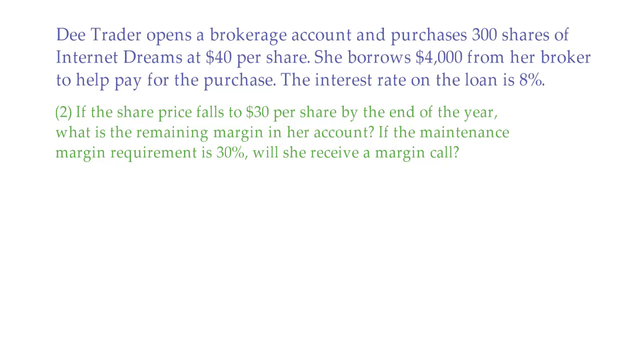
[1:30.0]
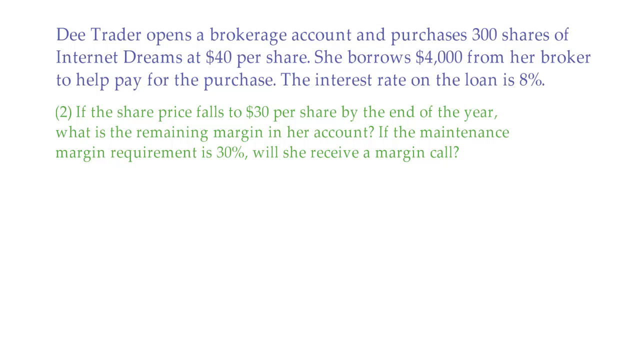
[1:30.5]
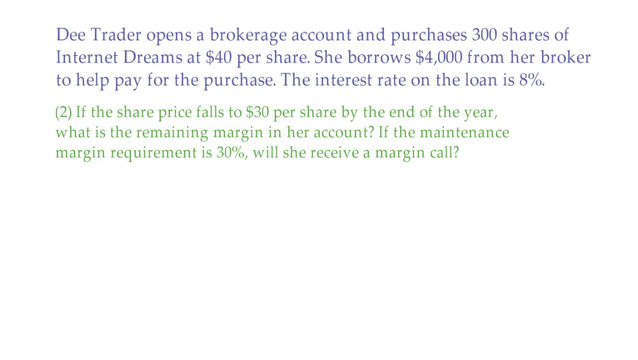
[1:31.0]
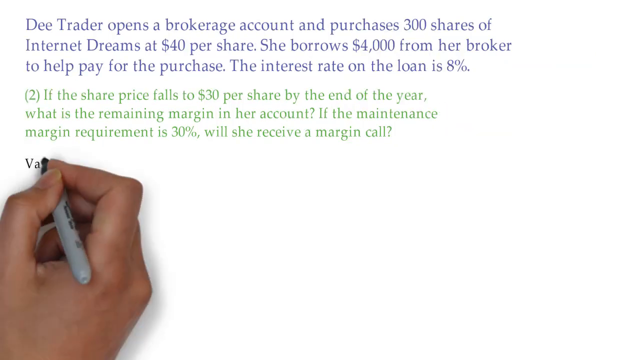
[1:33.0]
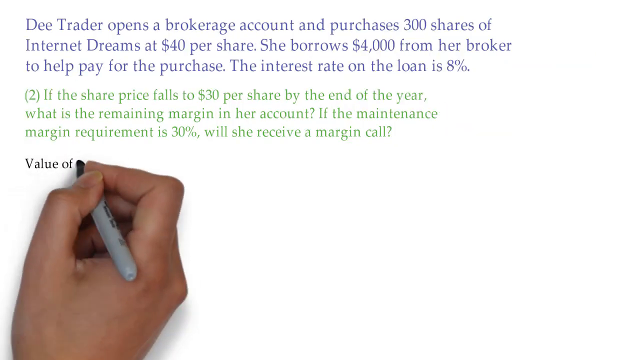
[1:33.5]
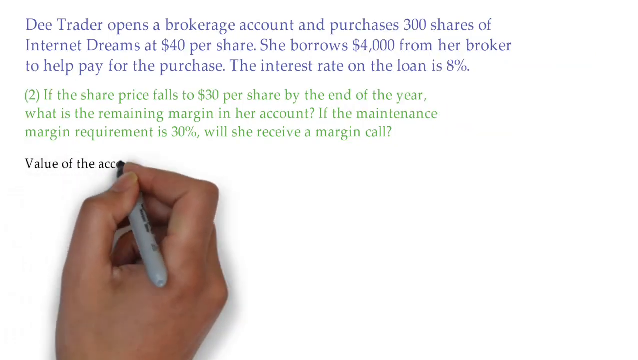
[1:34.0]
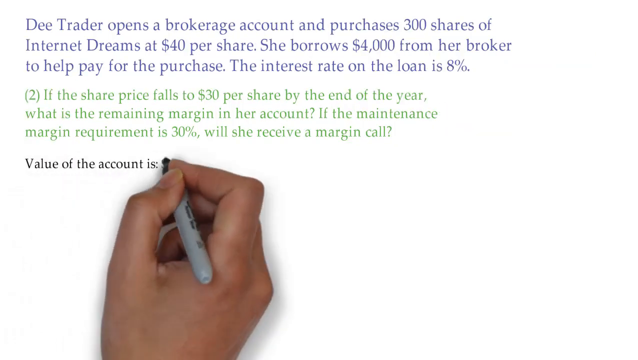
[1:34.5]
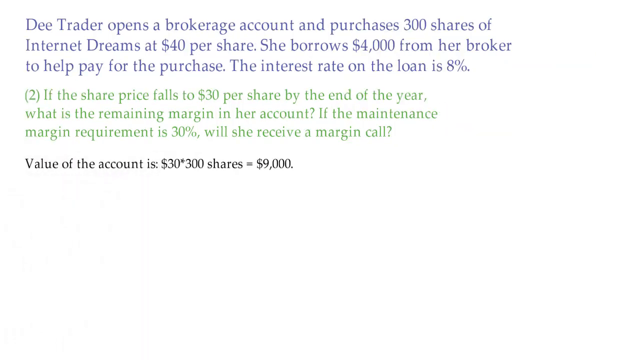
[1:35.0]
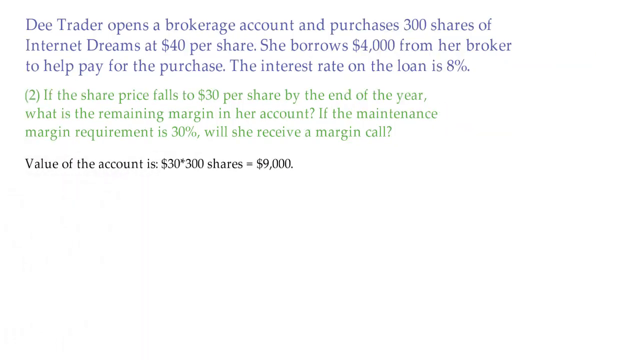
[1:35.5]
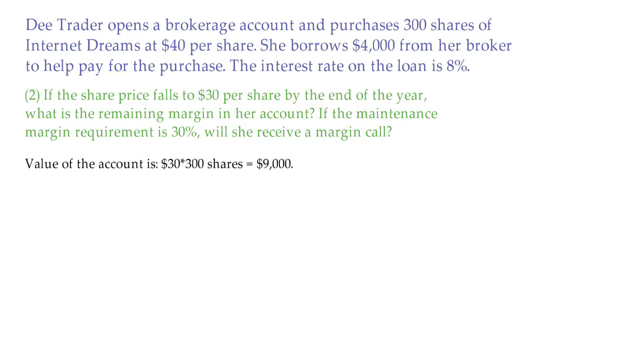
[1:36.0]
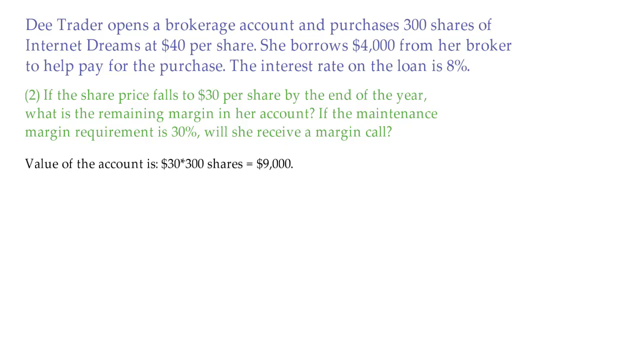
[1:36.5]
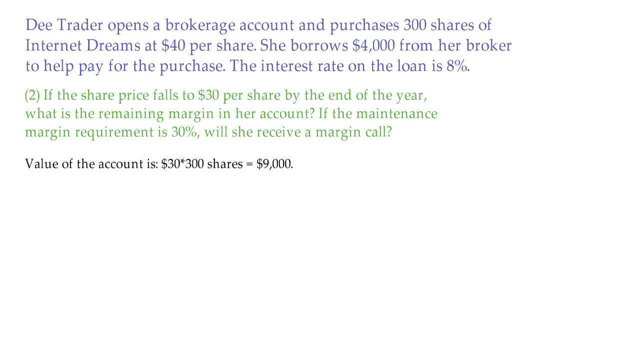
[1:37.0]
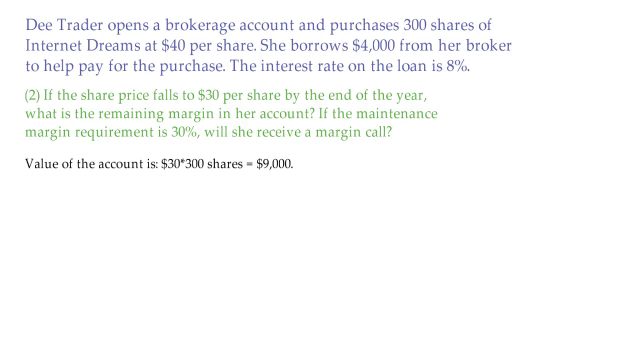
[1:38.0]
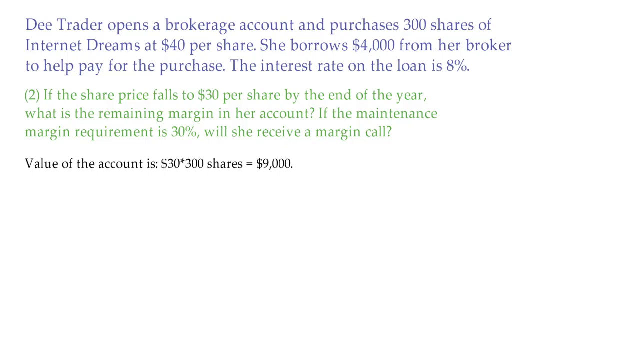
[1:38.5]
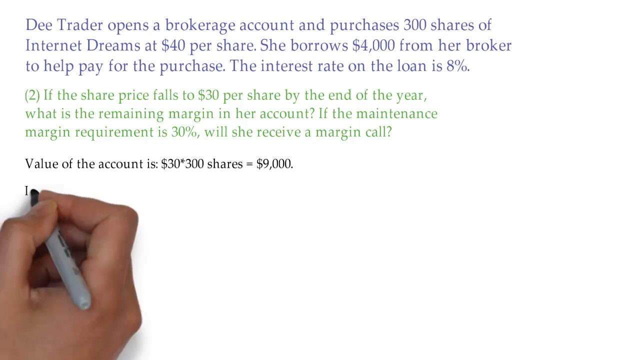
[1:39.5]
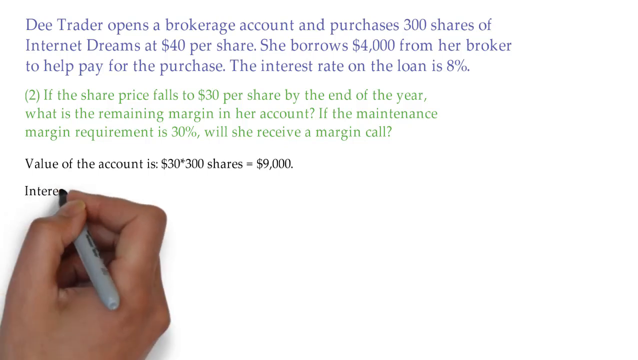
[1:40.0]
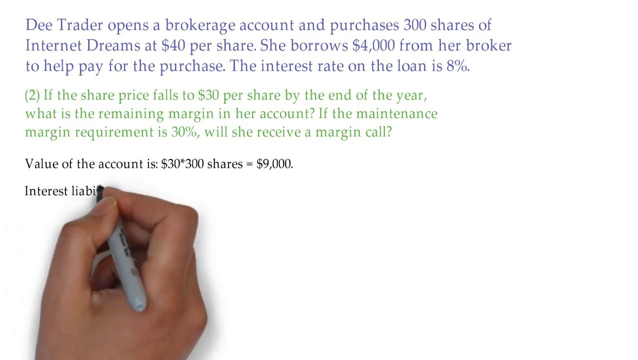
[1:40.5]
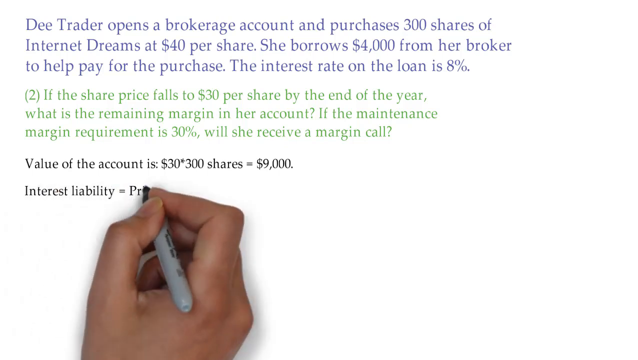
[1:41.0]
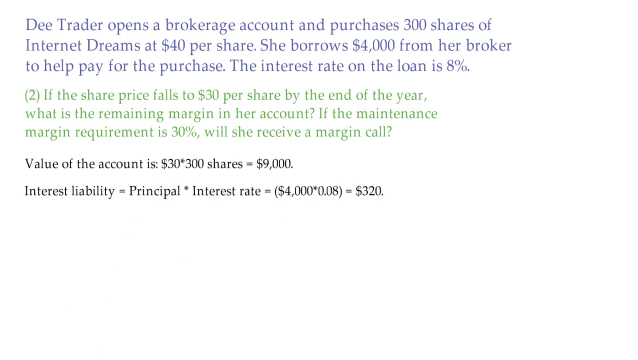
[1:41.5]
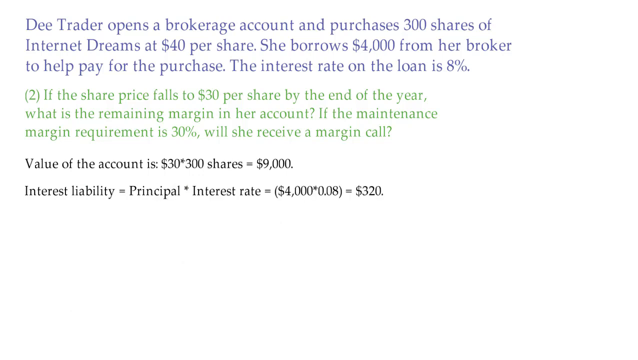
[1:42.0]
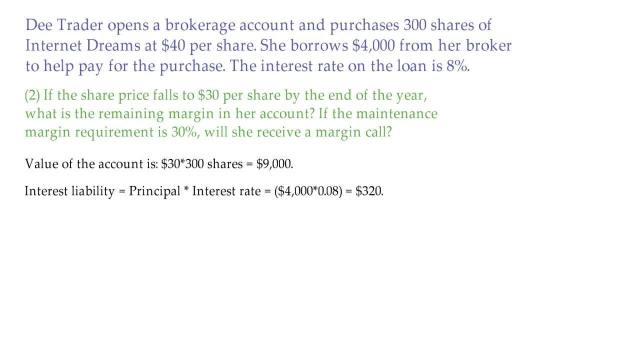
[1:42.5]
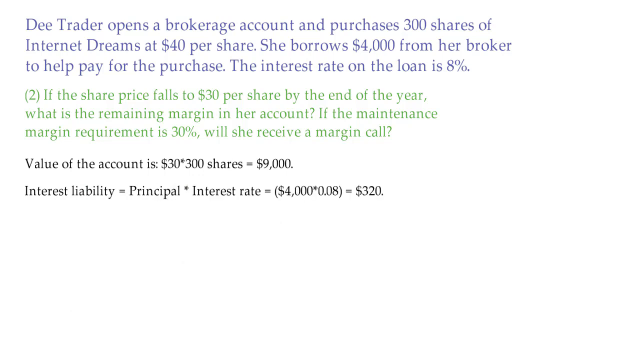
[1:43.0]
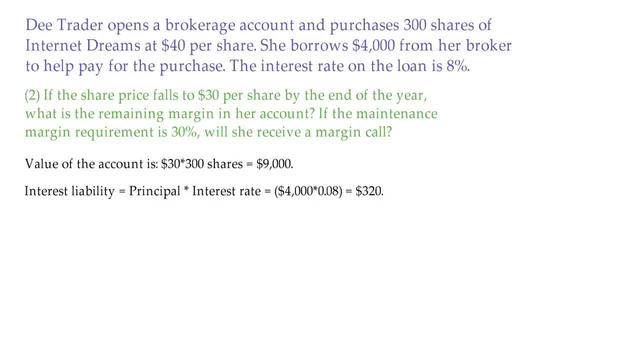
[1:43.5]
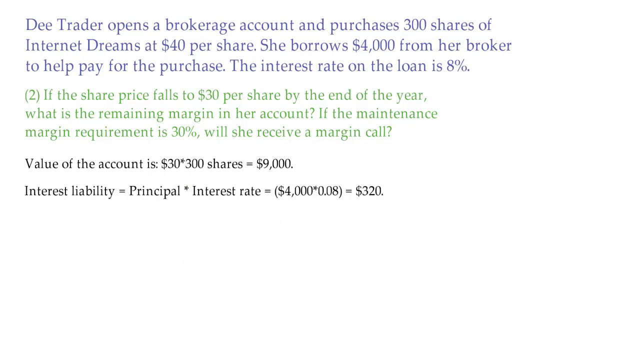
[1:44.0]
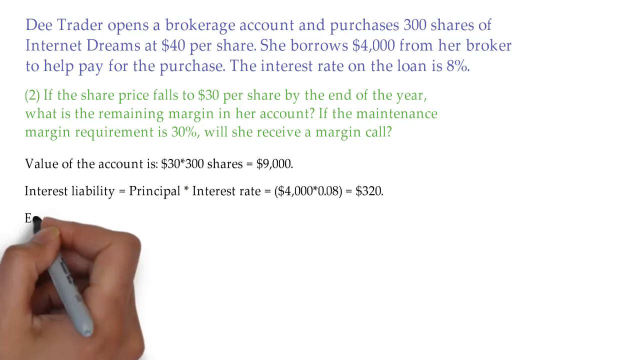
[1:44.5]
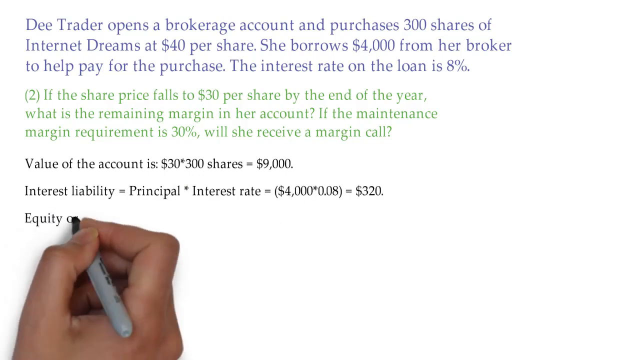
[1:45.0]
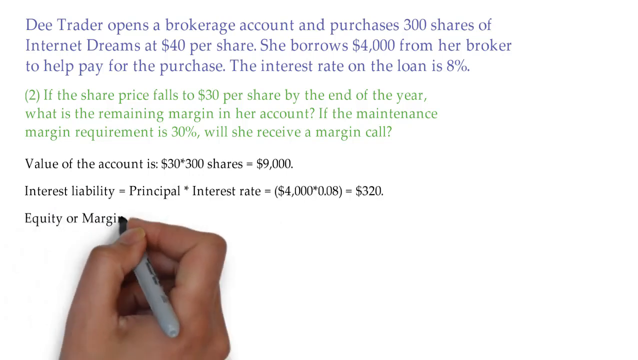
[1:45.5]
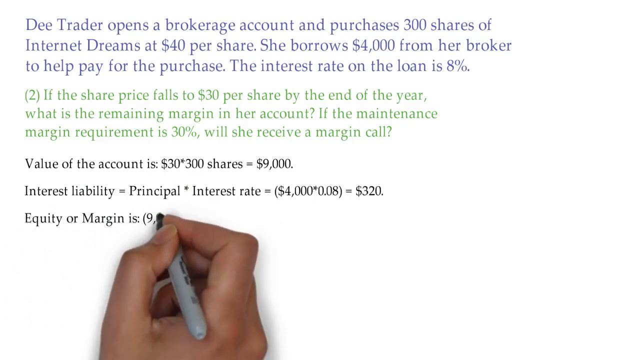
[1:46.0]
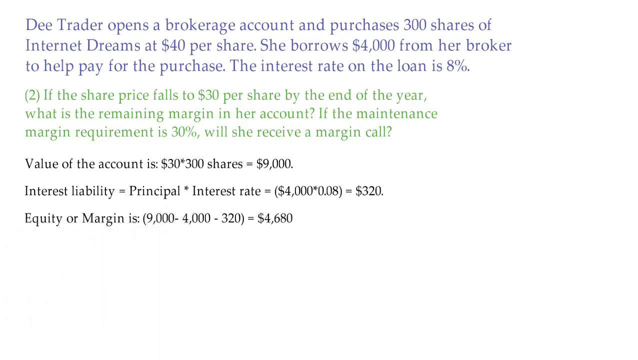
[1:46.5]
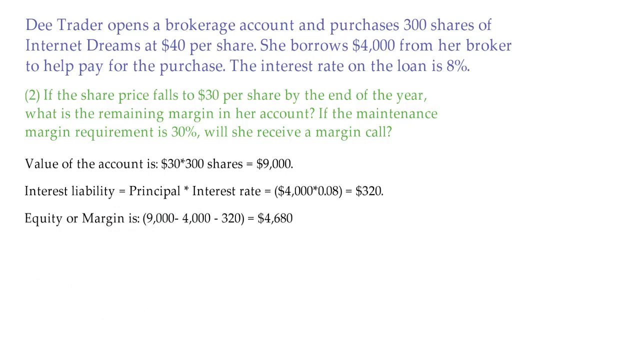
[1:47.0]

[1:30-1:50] Step two is shown in green: "(2) If the share price falls to $30 per share by the end of the year, what is the remaining margin in her account? If the maintenance margin requirement is 30%, will she receive a margin call?" Immediately under the question, black text appears as the Sharpie hand comes up. The first line reads "Value of the account is $30* 300 shares= $9,000." The line immediately under it, also in black, reads "Interest liability = principal * interest rate = $4,000 * 0.08 equals $320." The Sharpie hand comes up from the bottom again to write another black line: "Equity or margin is 9,000 -4,000 - 320 = 4,680." The Sharpie hand then comes from the top to write another black line: "equity or margin is $320."